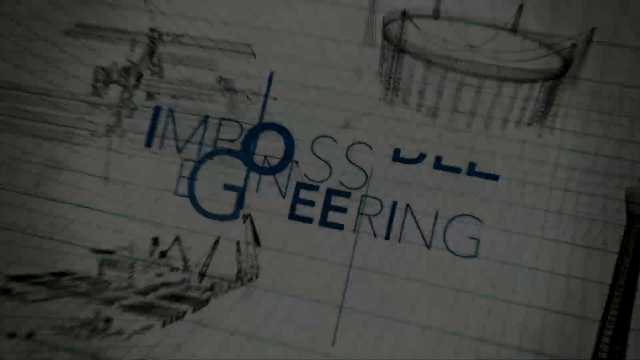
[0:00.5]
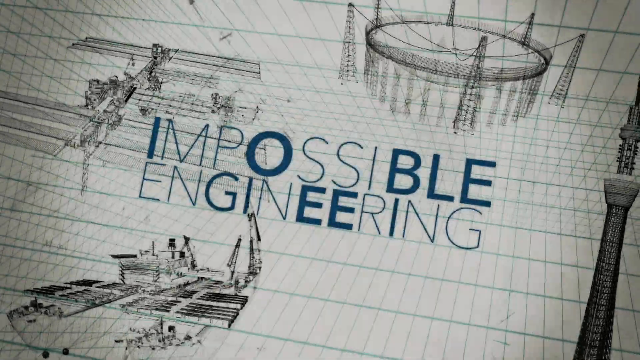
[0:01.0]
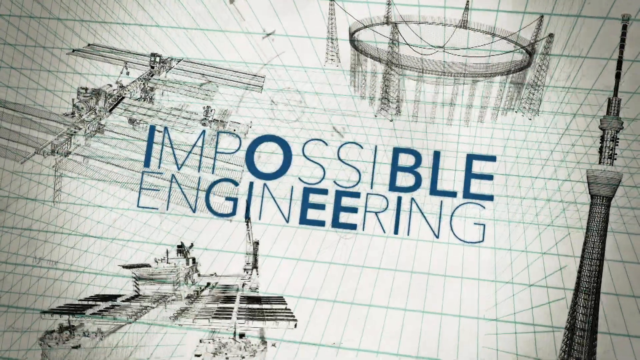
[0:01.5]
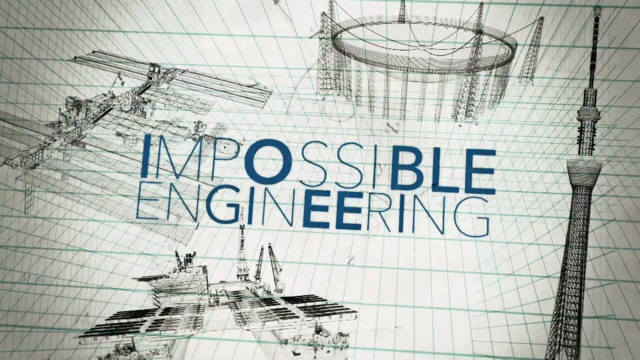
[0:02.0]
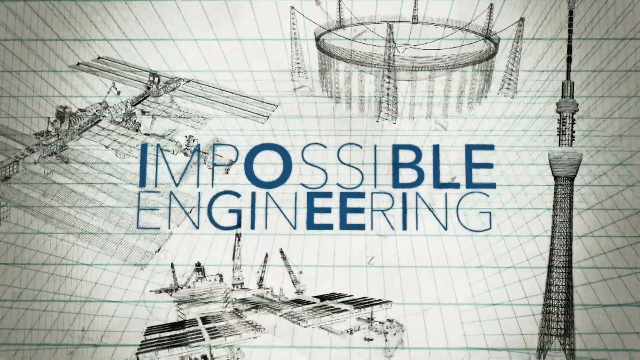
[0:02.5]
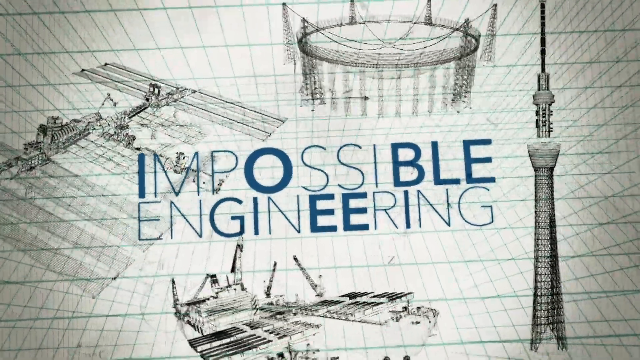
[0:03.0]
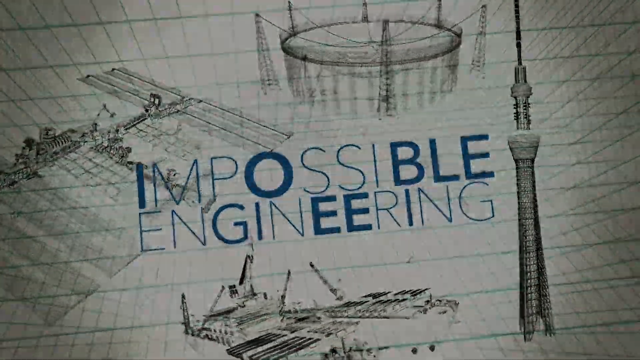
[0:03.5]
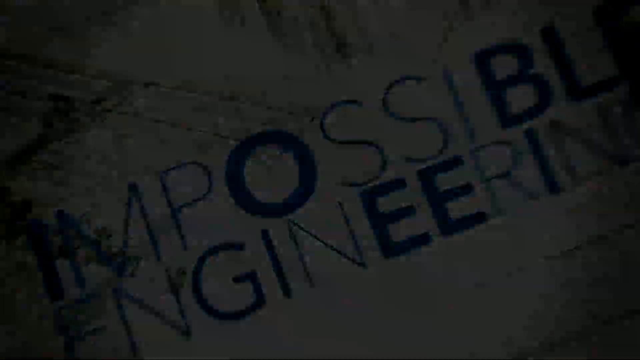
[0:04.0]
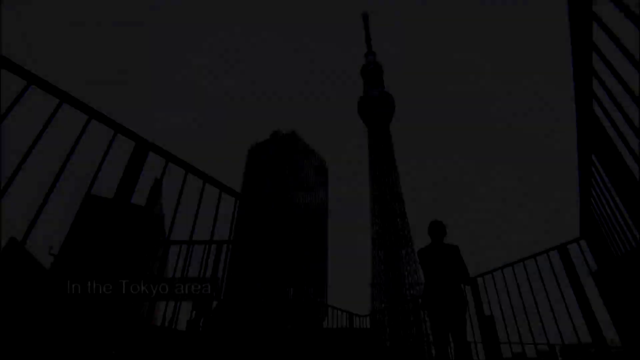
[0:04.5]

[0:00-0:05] The video opens on what looks to be a city, first in a close-up picture and then in an image from further out. The words "Impossible Engineering" then appear. A number of different cities are shown.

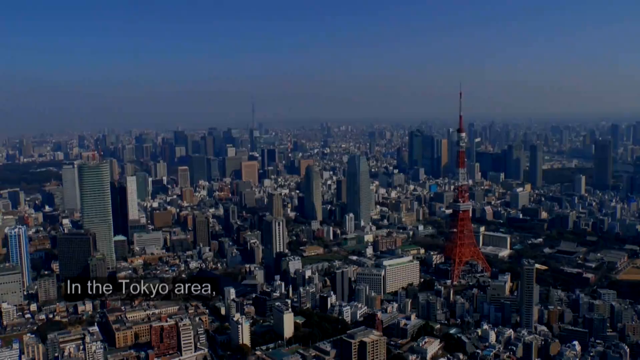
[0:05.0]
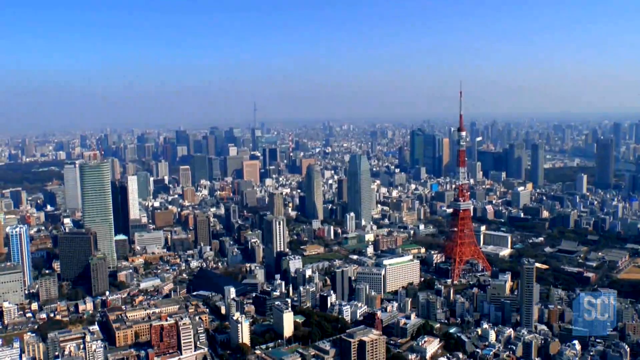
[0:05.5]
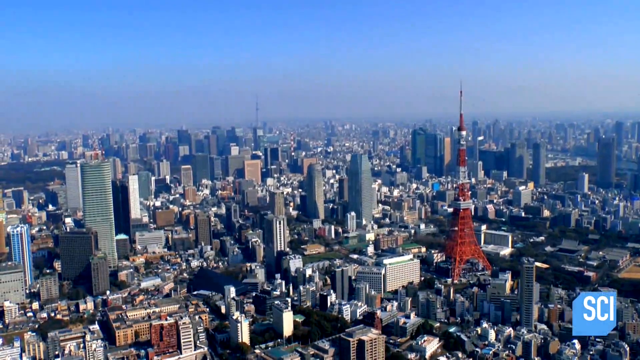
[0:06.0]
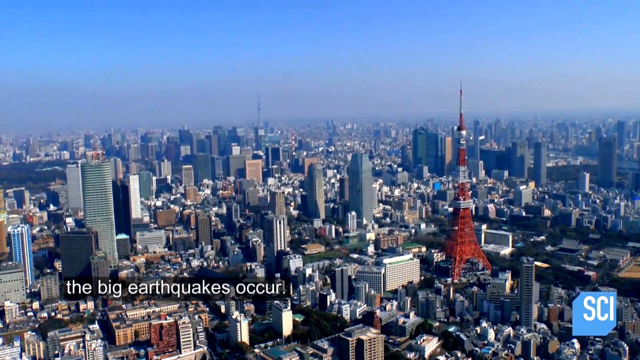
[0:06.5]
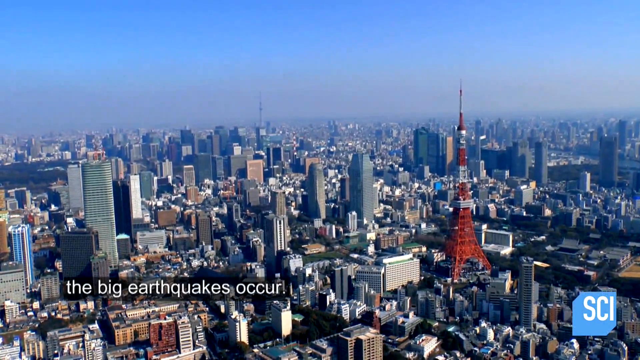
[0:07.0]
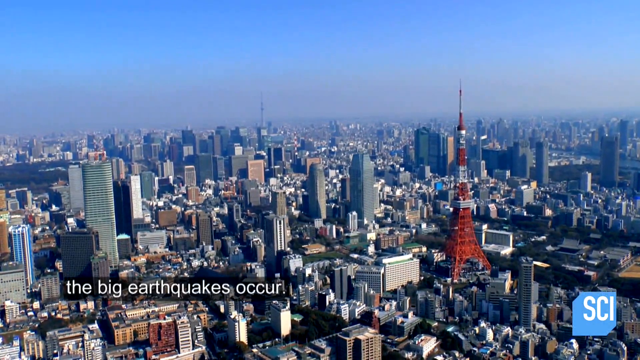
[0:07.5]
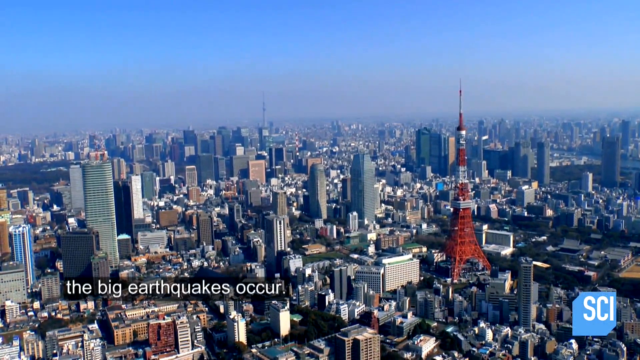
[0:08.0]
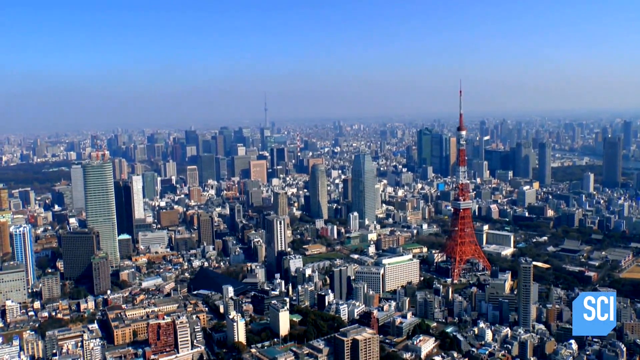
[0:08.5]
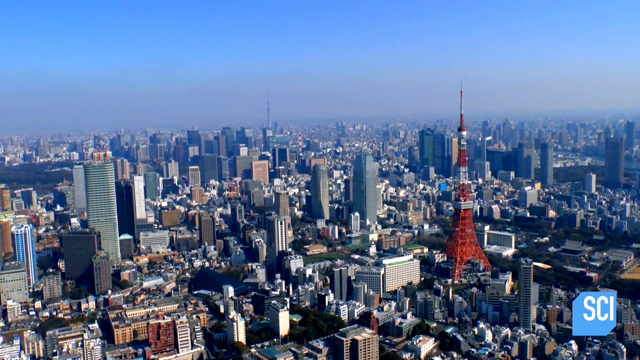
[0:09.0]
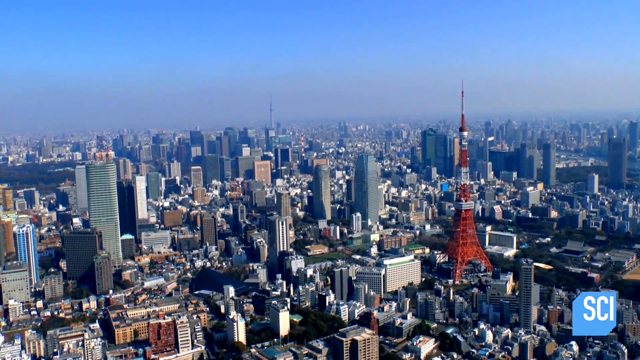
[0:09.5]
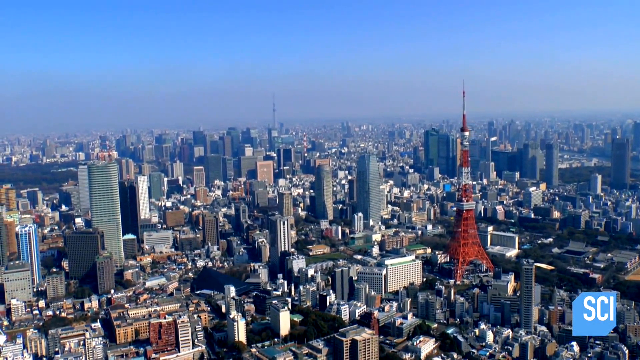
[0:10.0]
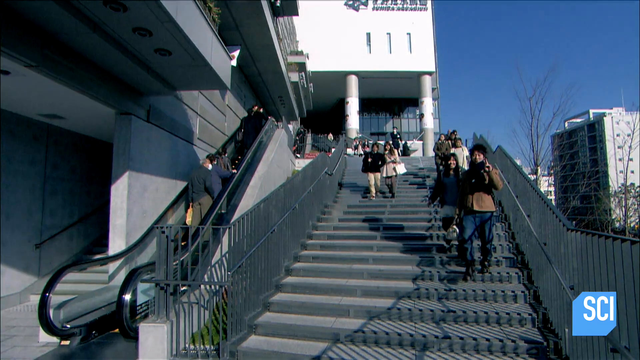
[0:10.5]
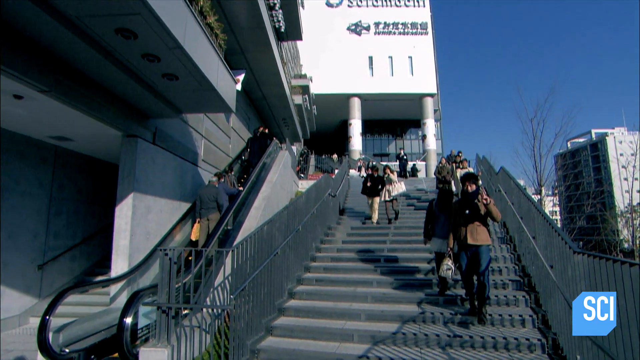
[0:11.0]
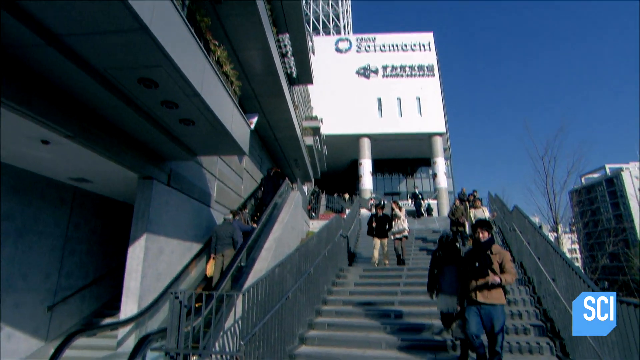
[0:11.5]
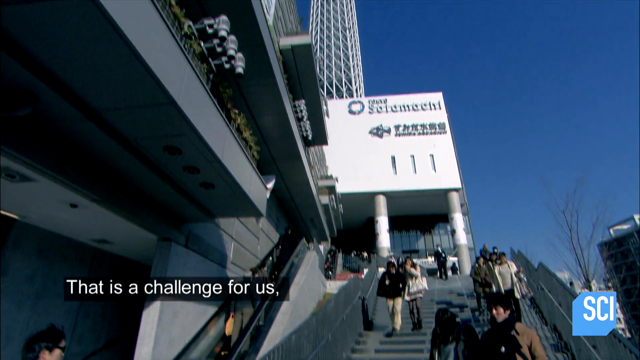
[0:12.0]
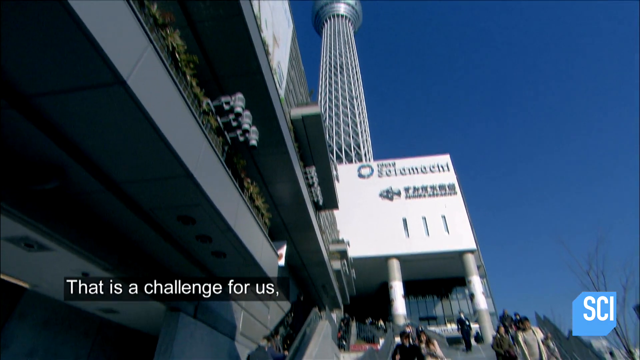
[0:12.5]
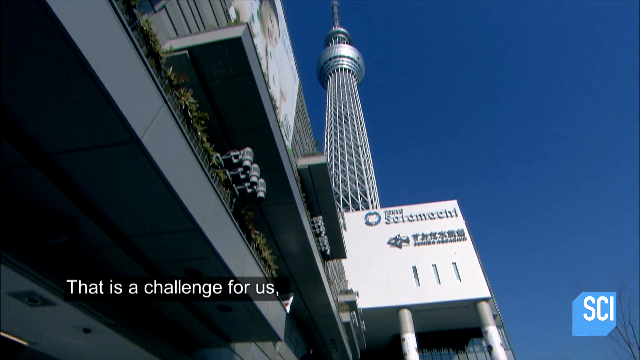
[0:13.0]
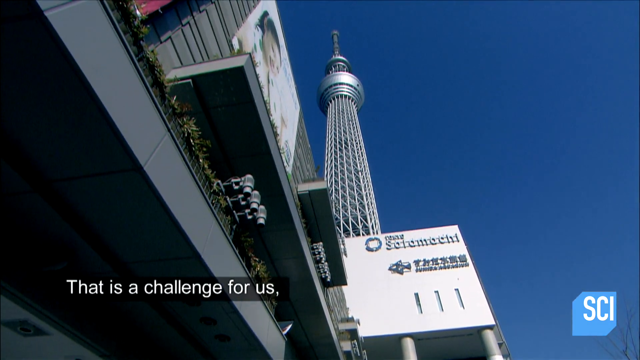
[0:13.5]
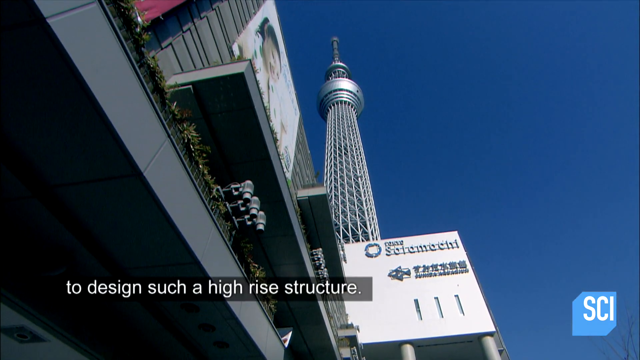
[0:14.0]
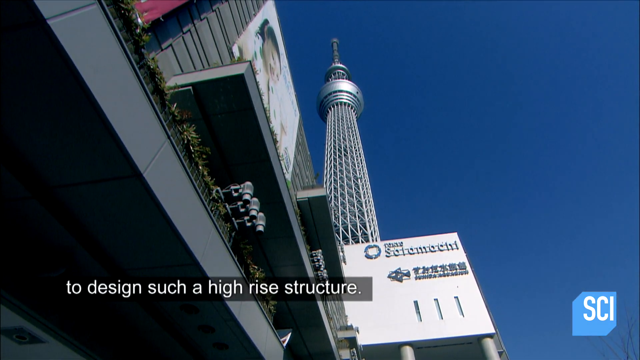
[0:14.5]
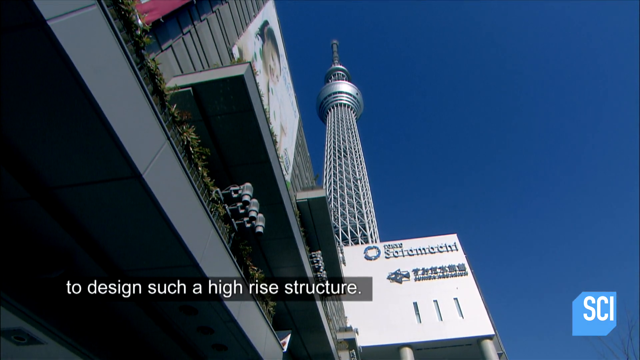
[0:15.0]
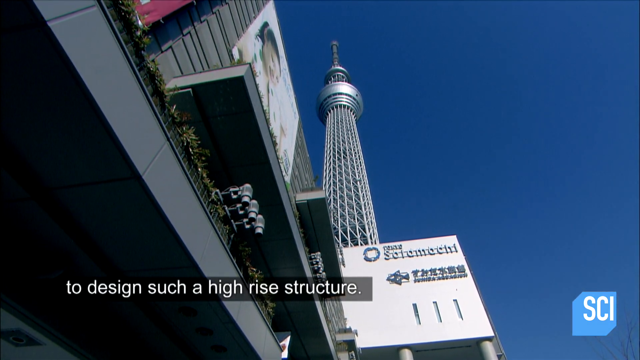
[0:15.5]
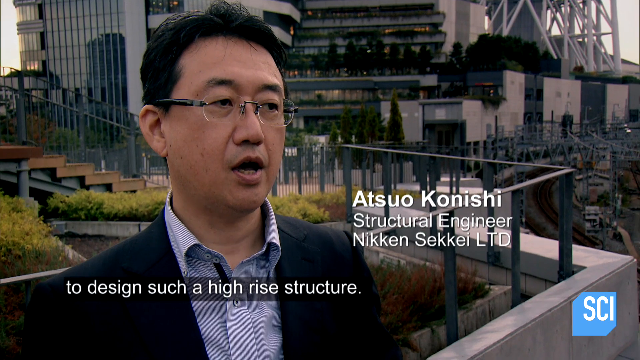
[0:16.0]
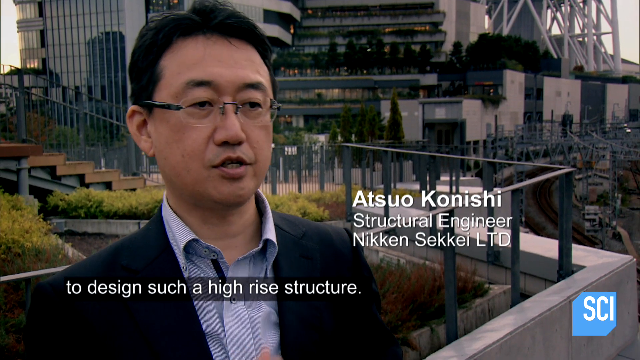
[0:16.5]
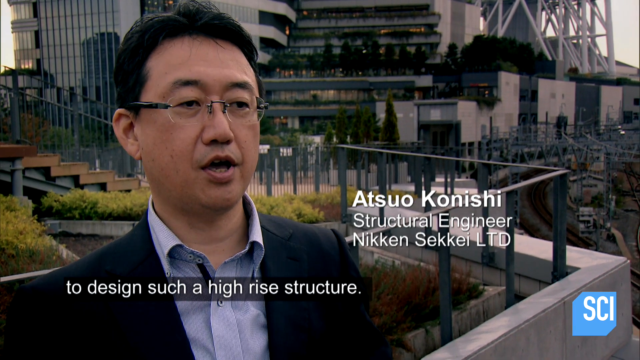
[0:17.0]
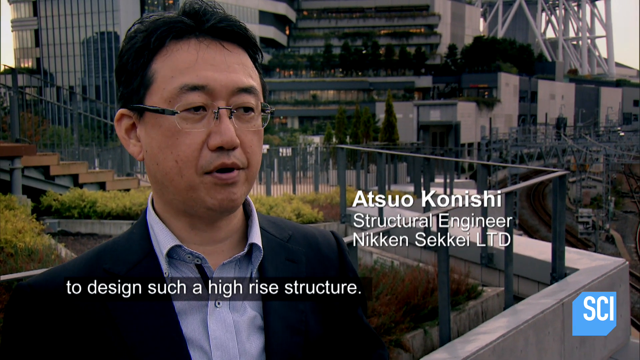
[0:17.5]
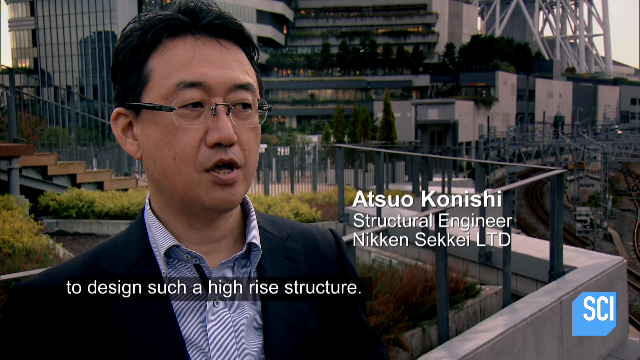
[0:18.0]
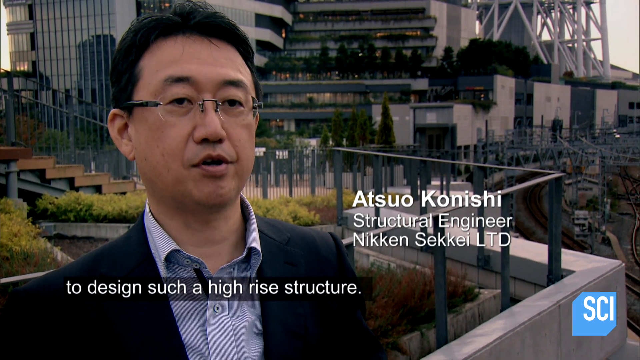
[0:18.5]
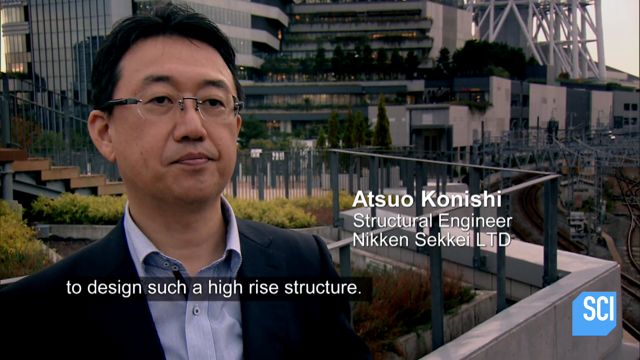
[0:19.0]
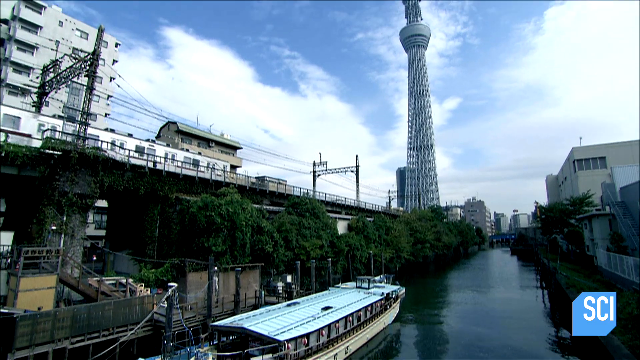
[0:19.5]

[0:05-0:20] A city is shown, along with an escalator with people walking down it. An engineer appears on screen, talking.